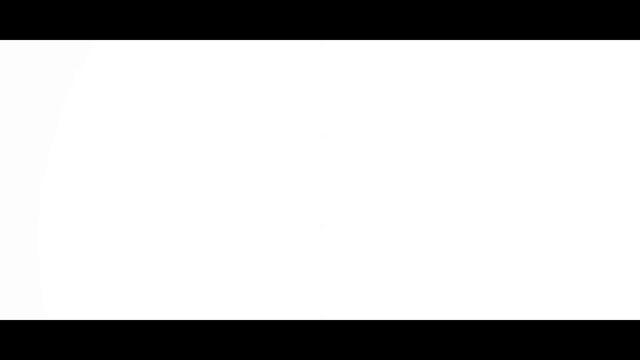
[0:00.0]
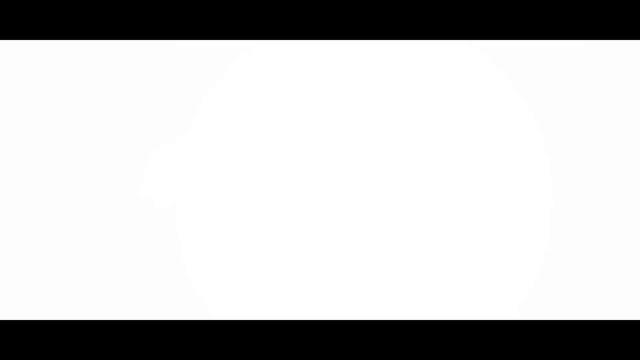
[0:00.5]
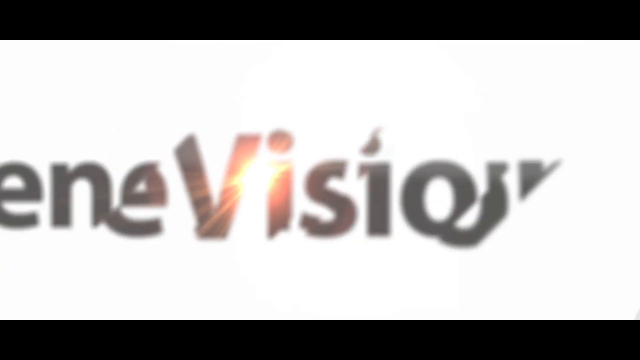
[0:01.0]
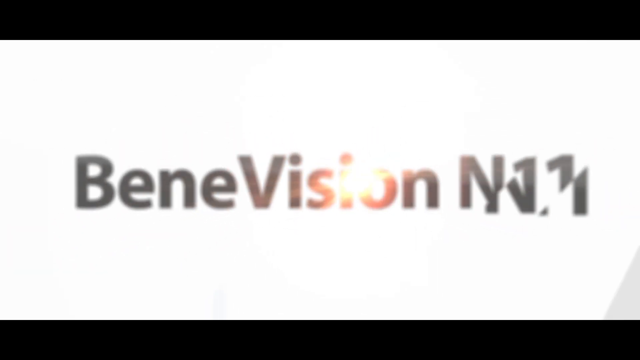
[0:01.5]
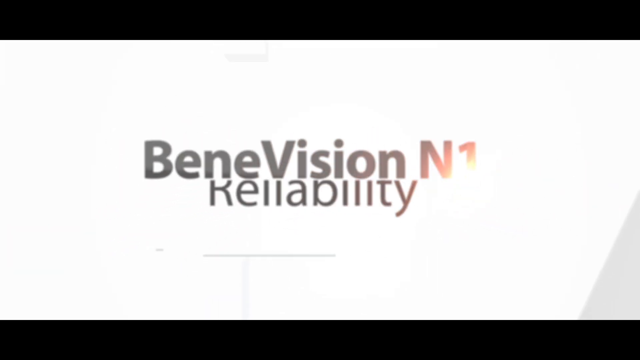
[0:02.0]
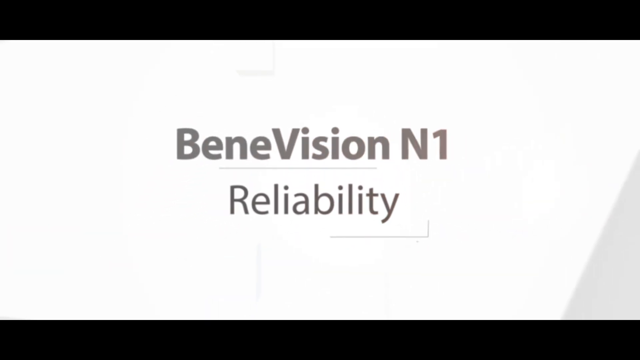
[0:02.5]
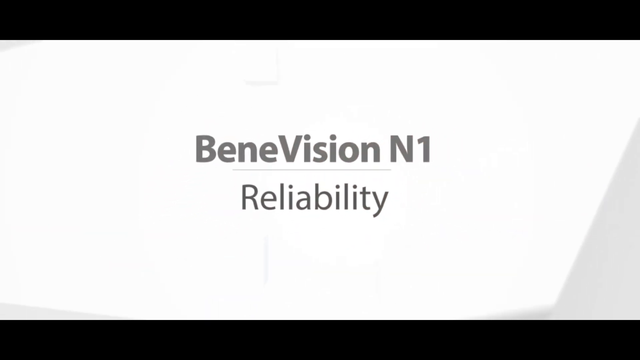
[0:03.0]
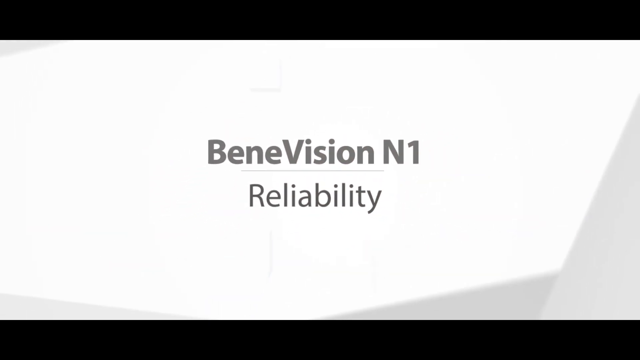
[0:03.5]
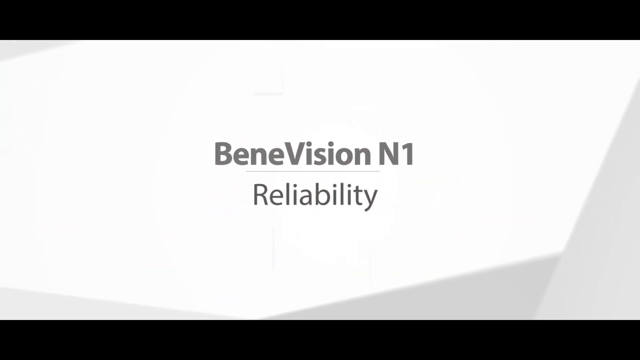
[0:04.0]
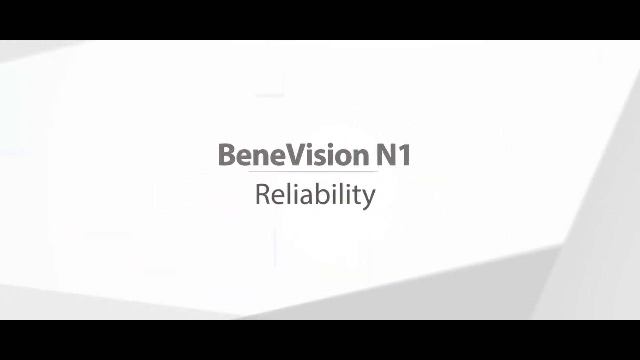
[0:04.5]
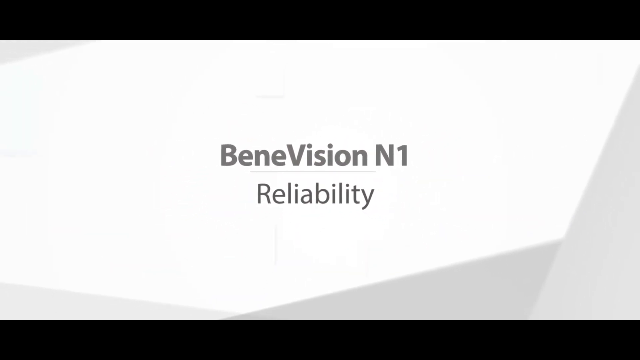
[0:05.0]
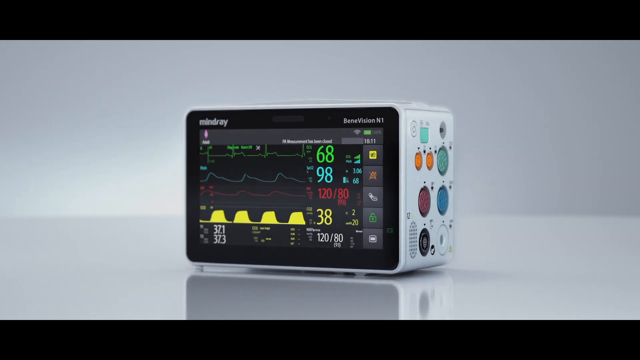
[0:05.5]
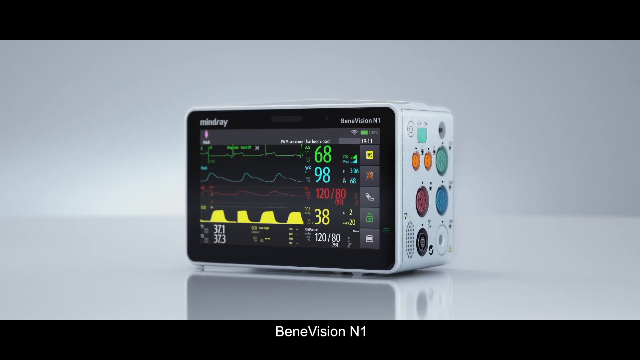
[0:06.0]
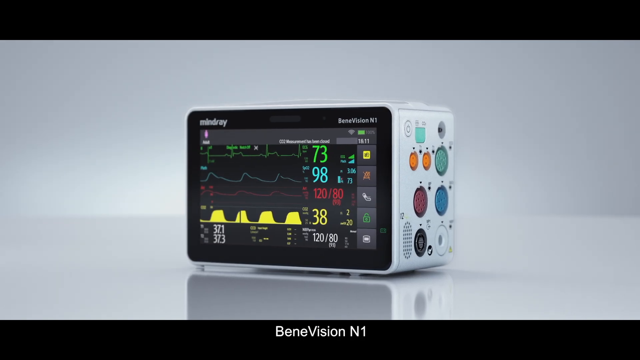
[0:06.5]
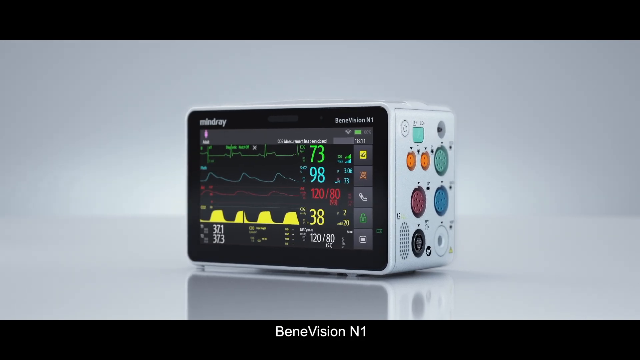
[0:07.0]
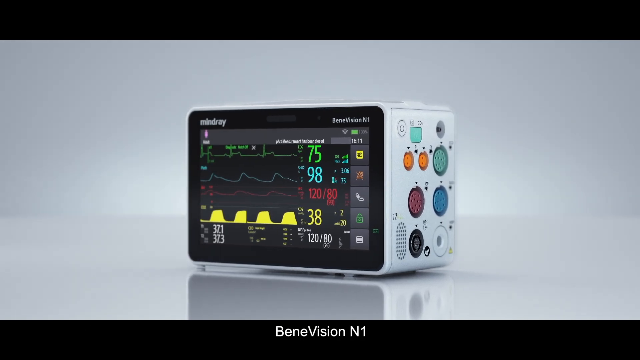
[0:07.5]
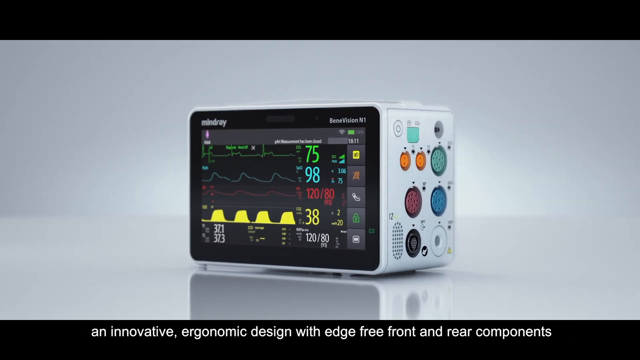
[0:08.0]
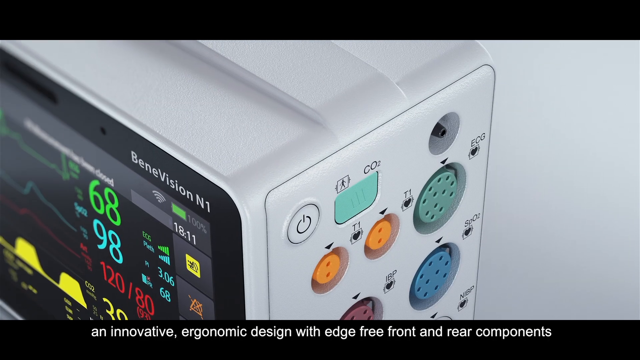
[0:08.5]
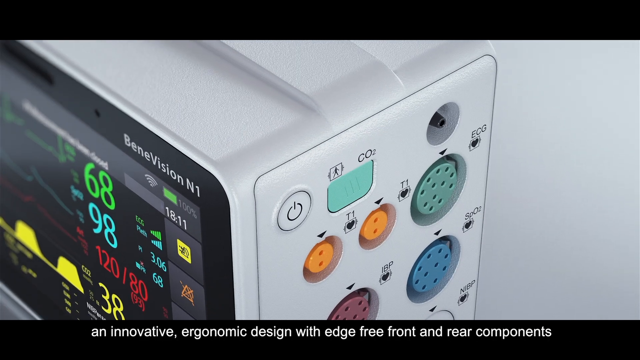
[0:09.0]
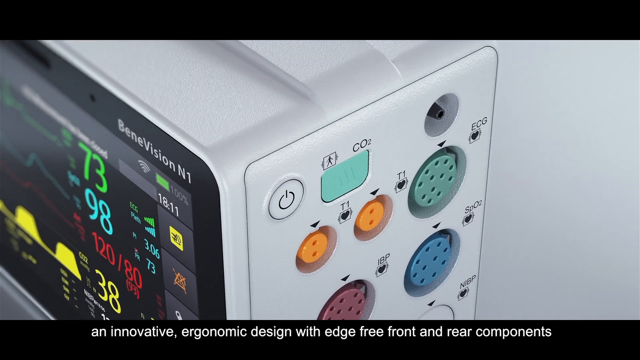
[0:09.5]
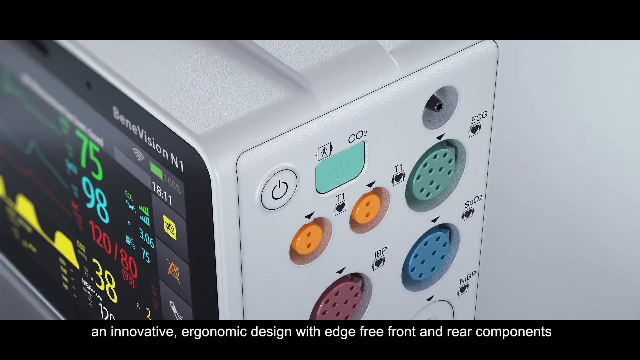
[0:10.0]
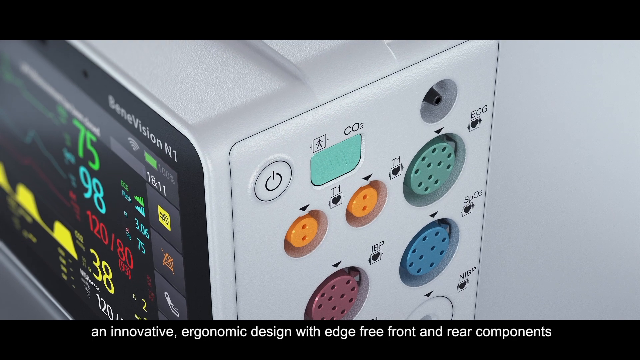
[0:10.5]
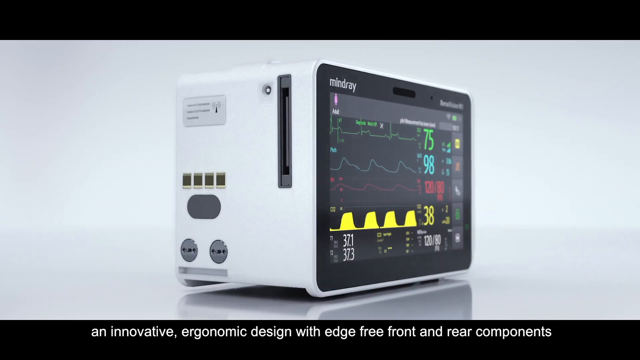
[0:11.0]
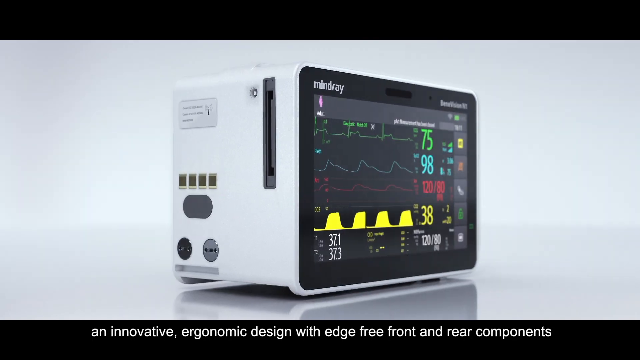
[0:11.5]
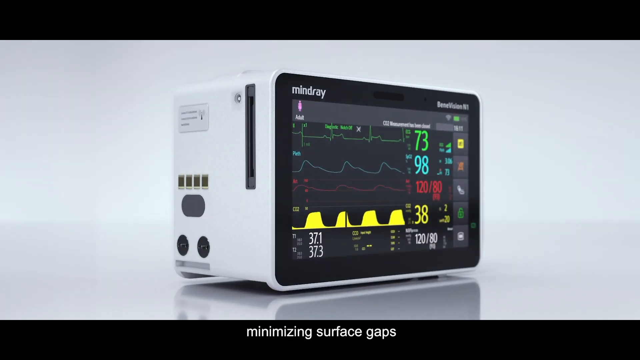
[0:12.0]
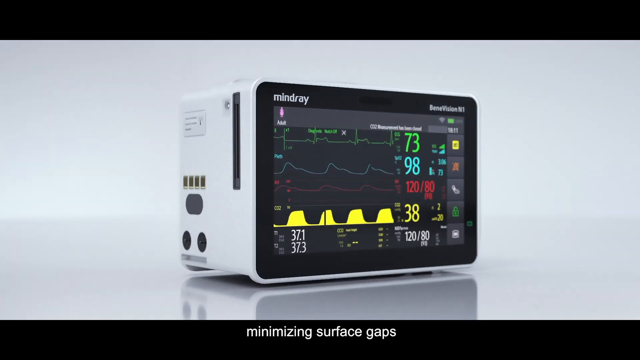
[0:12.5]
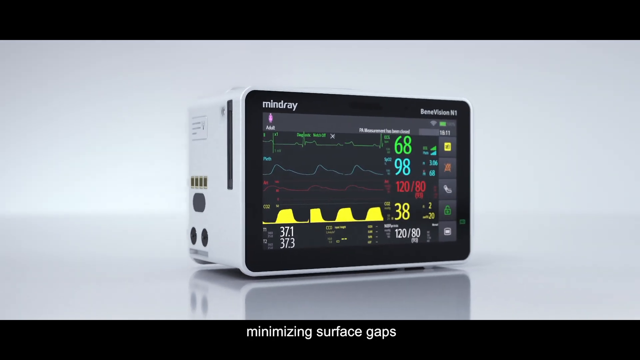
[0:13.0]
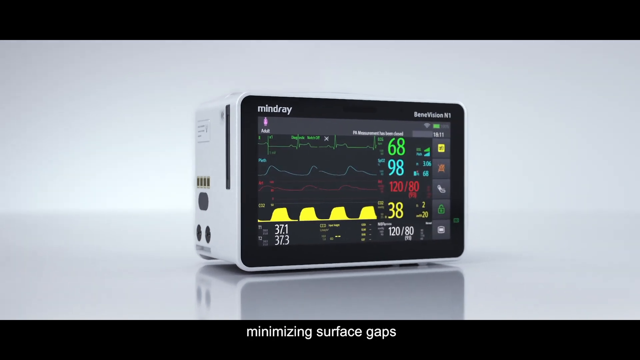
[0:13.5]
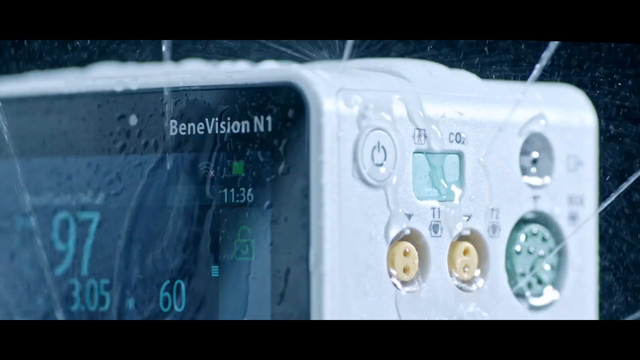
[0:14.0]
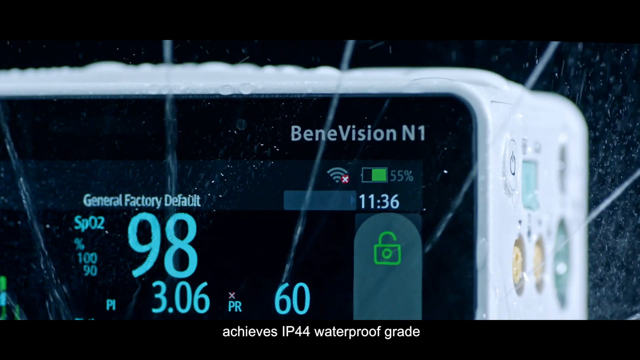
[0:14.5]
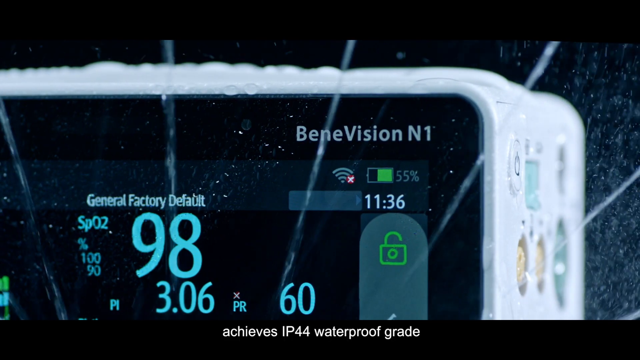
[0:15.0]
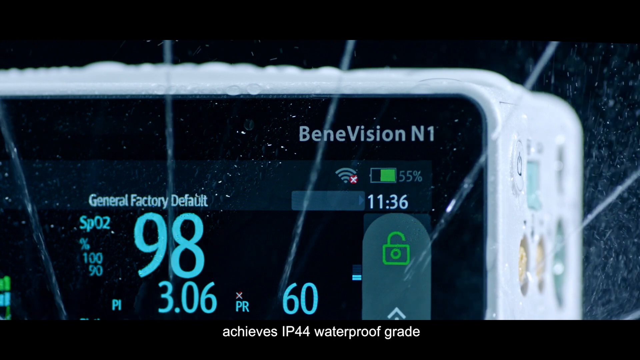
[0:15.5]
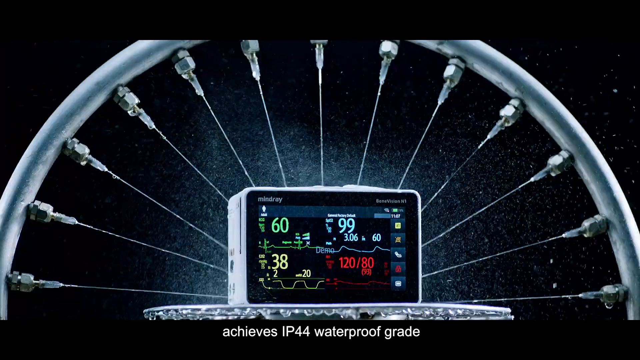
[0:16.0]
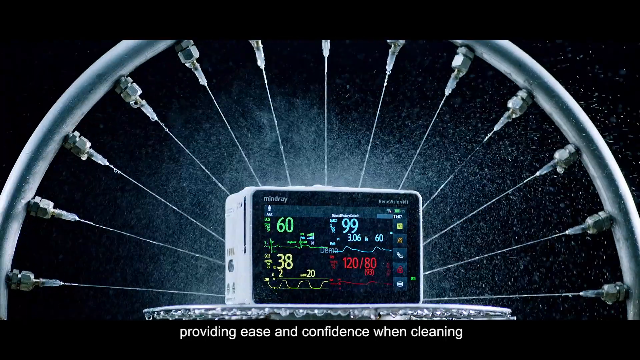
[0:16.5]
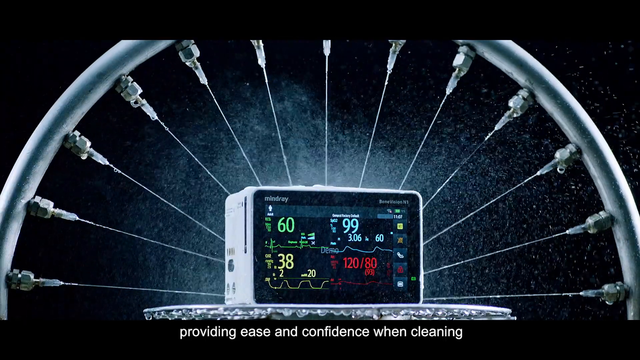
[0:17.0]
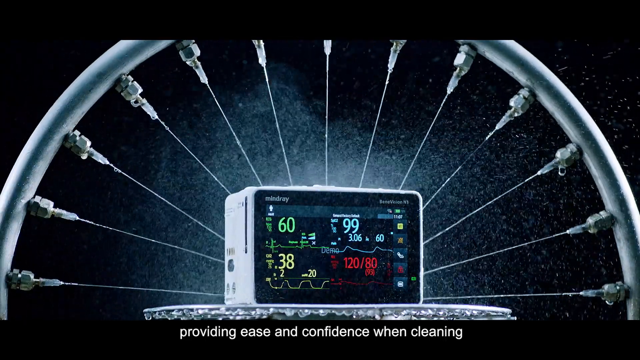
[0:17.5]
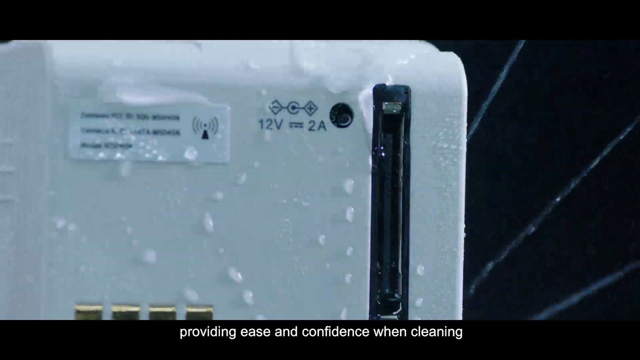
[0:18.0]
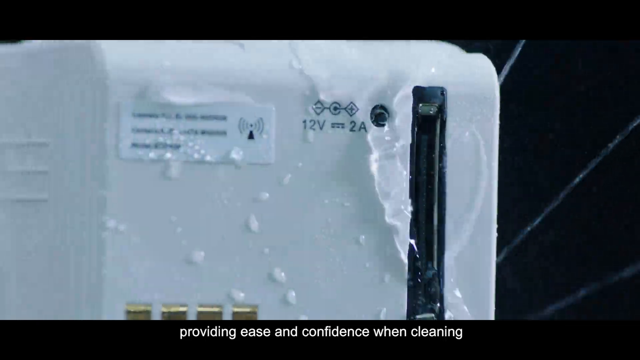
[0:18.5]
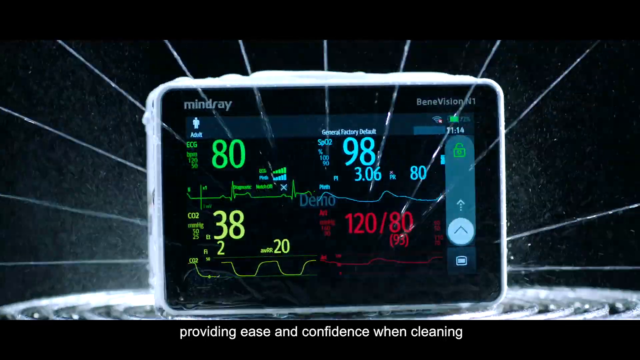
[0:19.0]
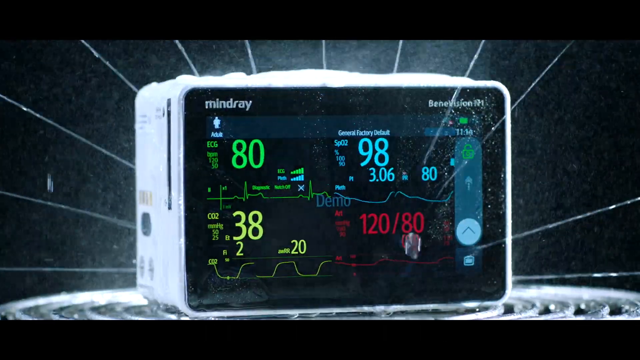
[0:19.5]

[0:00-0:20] An intro shows the text "BeneVision N1" with "Reliability" right below it. Something then appears to twist around, and text at the bottom reads "BeneVision N1 Innovative ergonomic design with edge-free front and rear components." The device looks unusual and has a bunch of stats on its screen, almost like medical stats showing heart rate and similar readings. Animations follow in which a ring comes around the device and water is sprayed at it; it looks like it can be cleaned without fear of damaging the inside with water. It has some sort of protective barrier around it. The surface it is on is a gray, clear table.